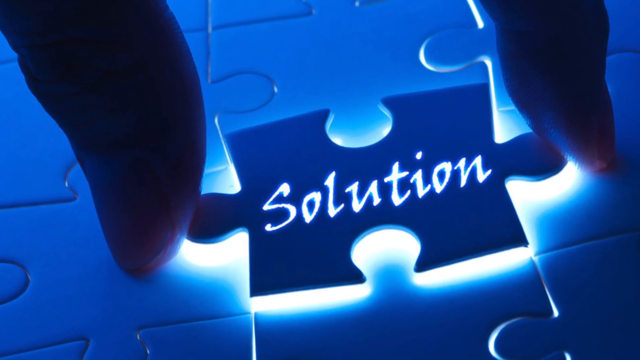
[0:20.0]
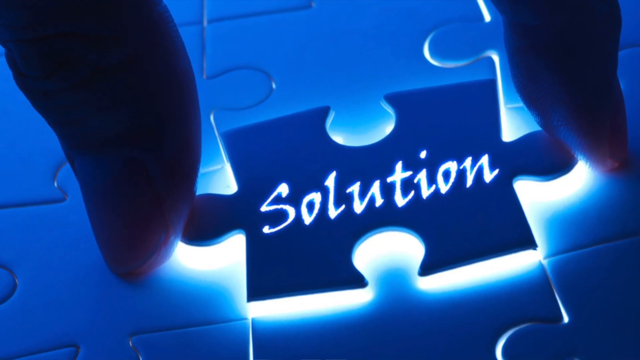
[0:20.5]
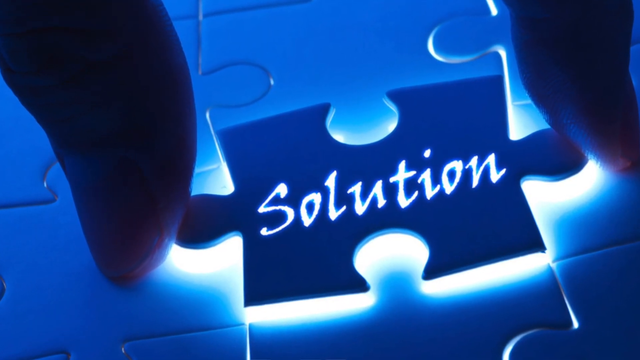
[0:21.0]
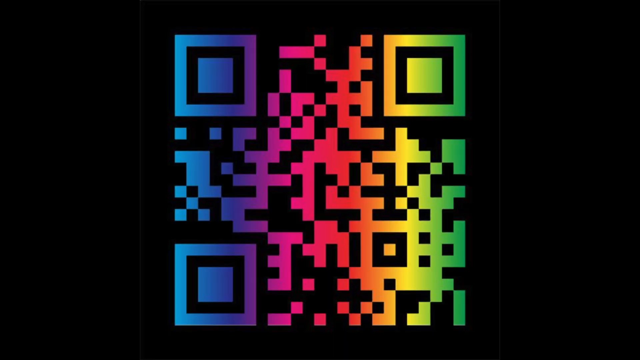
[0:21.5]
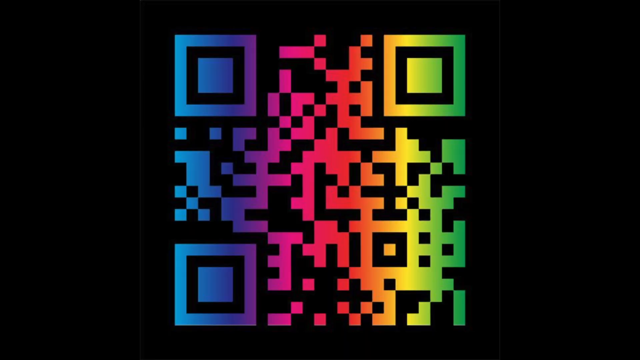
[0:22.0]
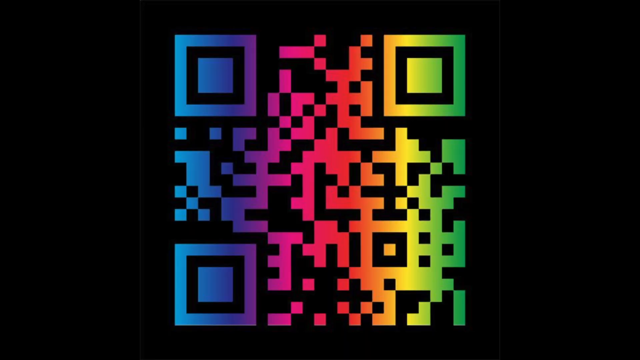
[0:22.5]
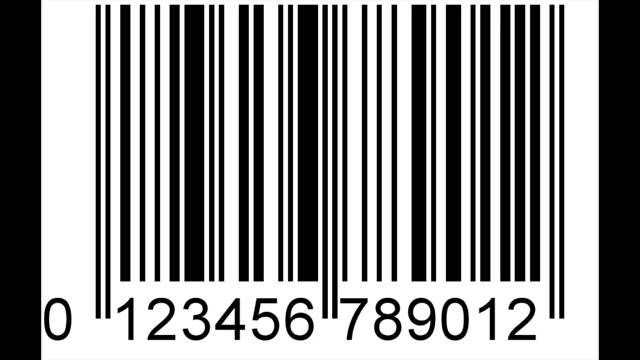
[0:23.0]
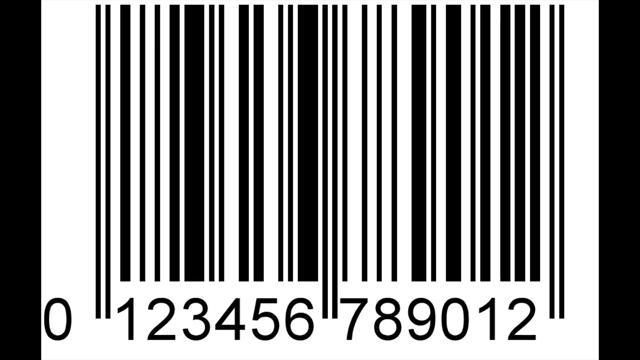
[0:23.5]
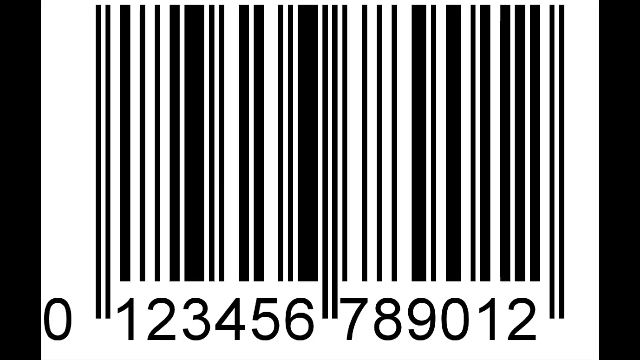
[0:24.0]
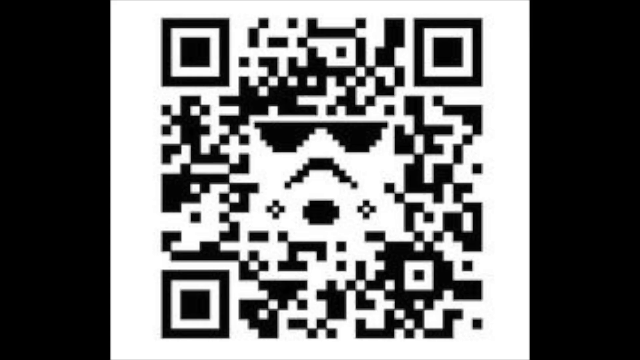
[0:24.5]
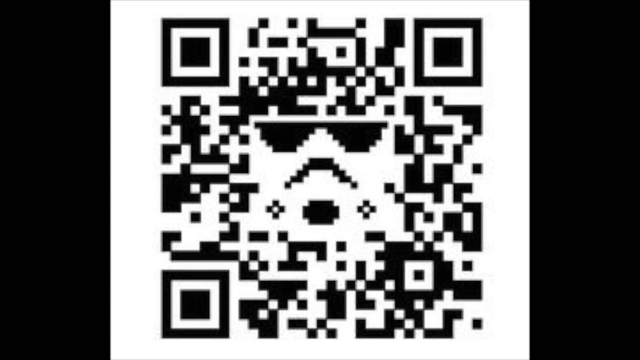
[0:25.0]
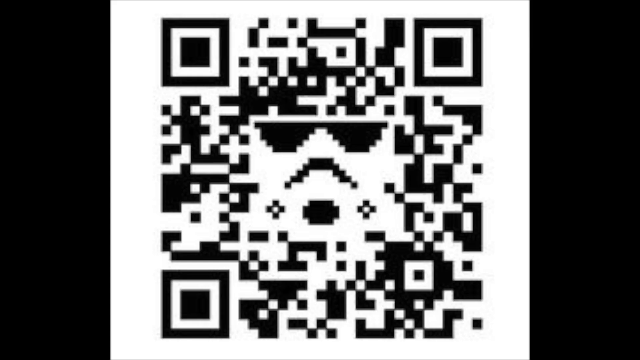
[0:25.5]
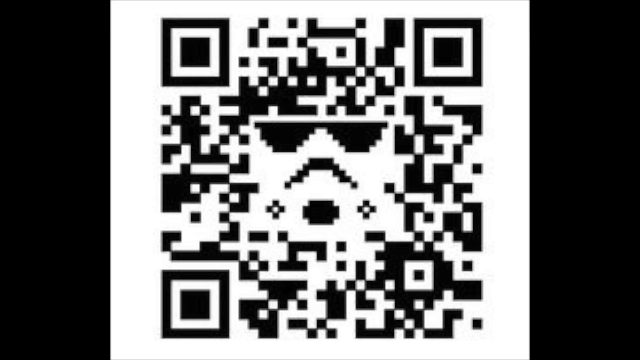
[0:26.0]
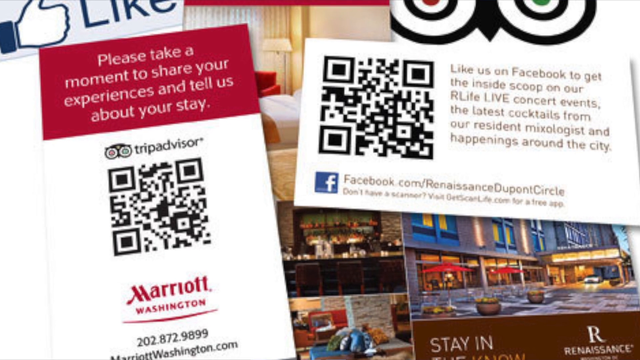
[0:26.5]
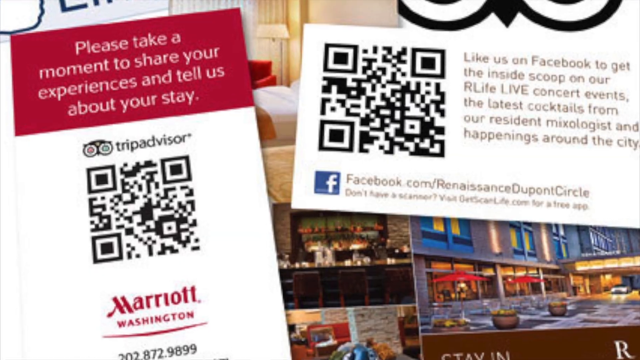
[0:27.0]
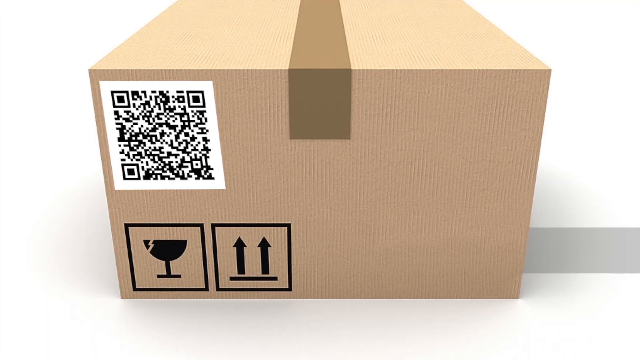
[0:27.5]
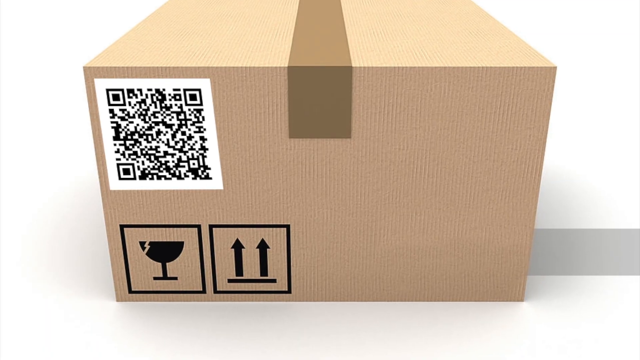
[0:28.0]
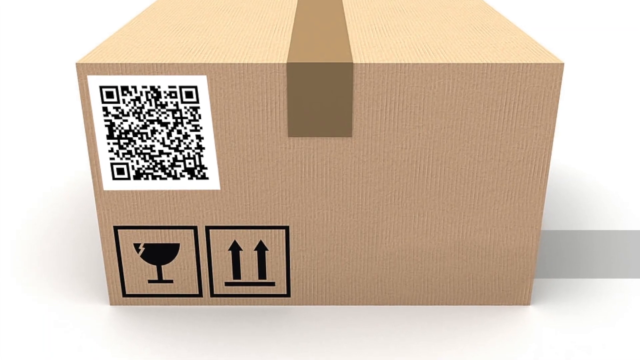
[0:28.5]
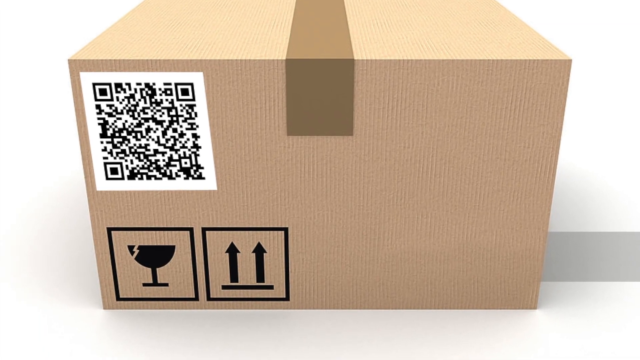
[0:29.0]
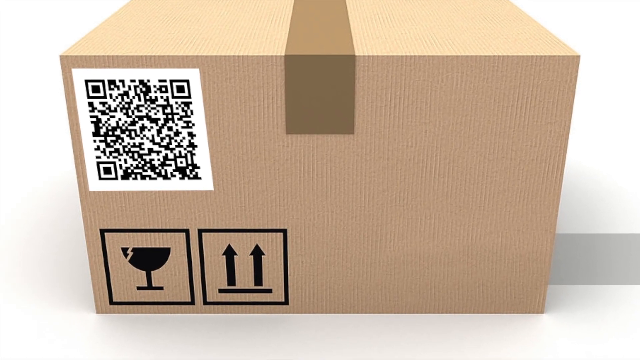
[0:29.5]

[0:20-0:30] A thumb and pointer finger hold a puzzle piece and put it into a puzzle that is already finished. The top of the piece appears to say "solution", and light shines from the bottom. The camera pans in and zooms in very close, and suddenly the screen changes to a multicolored barcode that looks kind of like an Instagram barcode, with the rest of the image dark. That image then swaps to the kind of barcode found on the back of packaging: black lines on a black and white background with the numbers "0123456789012" at the bottom. The scene changes to another barcode that appears to have a face in its center: a square barcode with squares in each corner and, in the middle, what looks like a person wearing shades, frowning, with a little goatee. Next, many pamphlets and cards lie on a table, and the two cards at the top both have barcodes. The one on the left says "Marriott, please take a moment to share your experiences and tell us about your stay." The one on the right is a card for Facebook. The scene then changes to a 3D animation of a cardboard box with a barcode on it and two symbols at the bottom: a glass with a crack in it and some arrows.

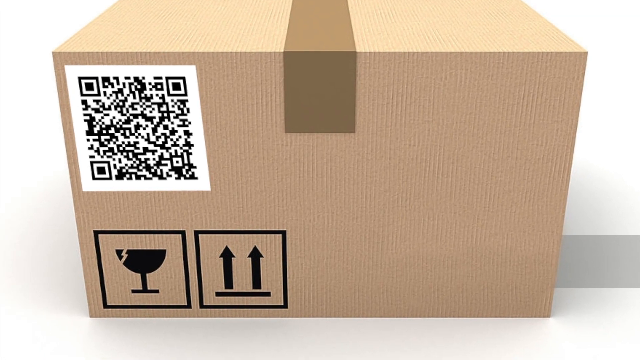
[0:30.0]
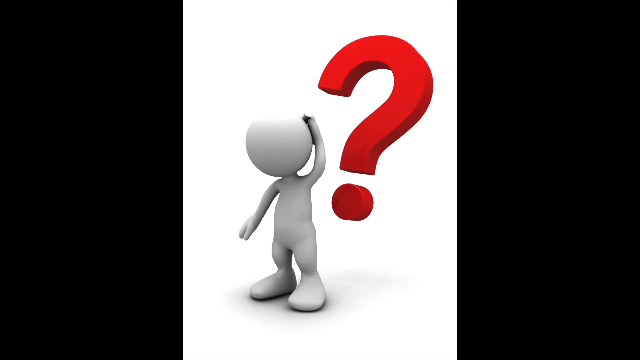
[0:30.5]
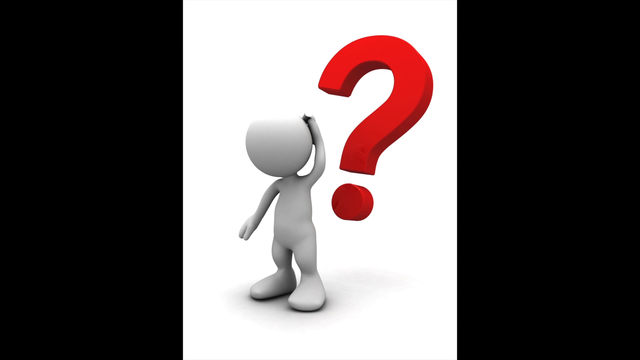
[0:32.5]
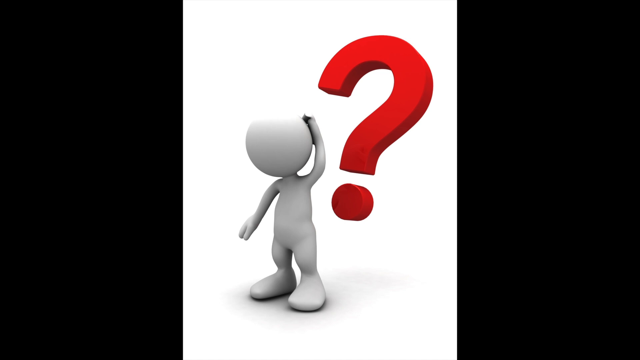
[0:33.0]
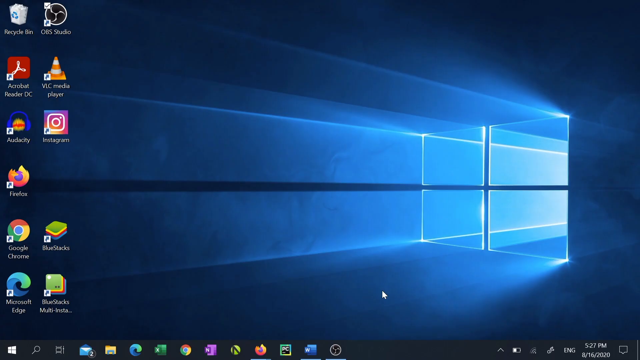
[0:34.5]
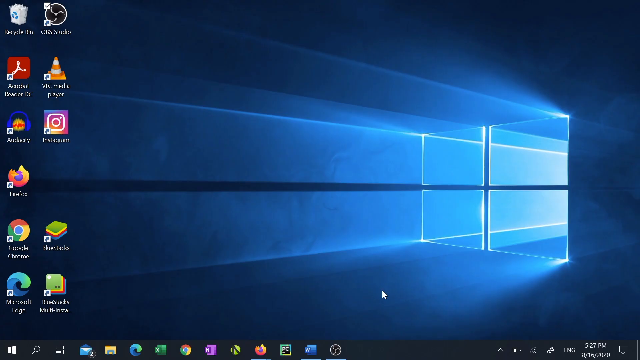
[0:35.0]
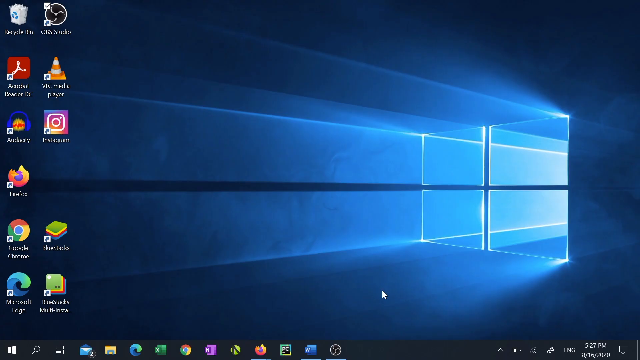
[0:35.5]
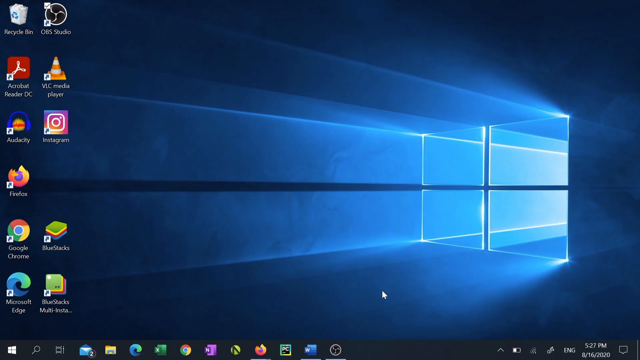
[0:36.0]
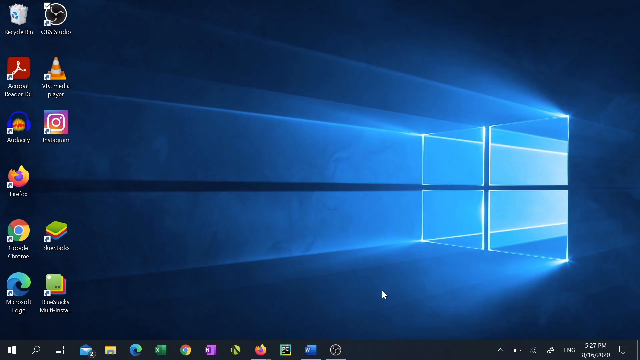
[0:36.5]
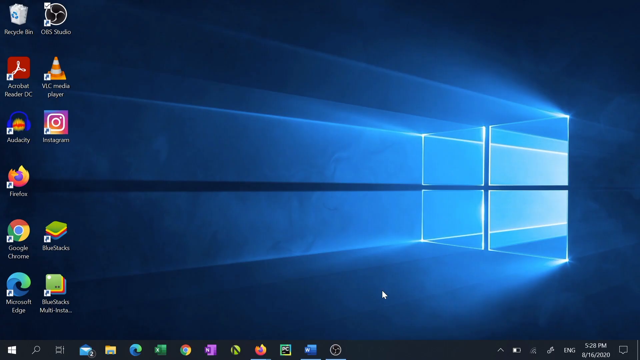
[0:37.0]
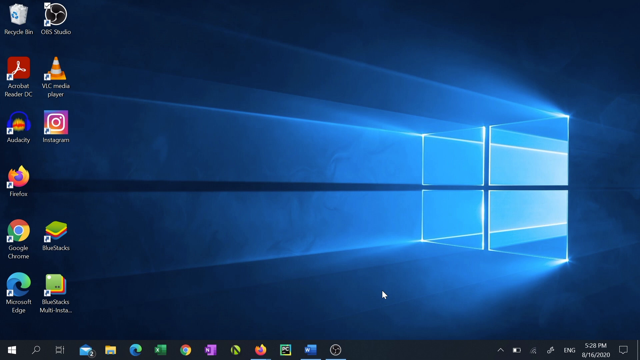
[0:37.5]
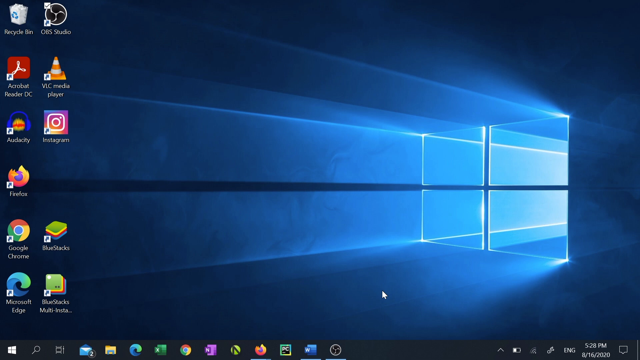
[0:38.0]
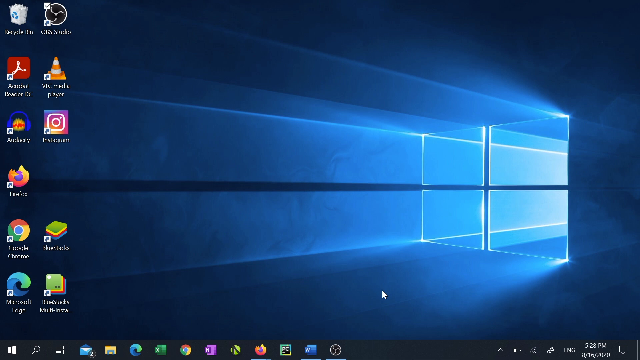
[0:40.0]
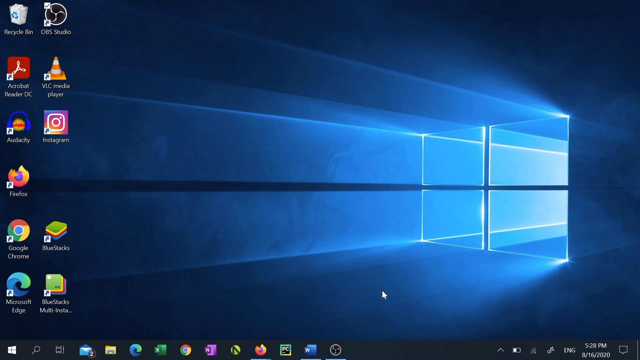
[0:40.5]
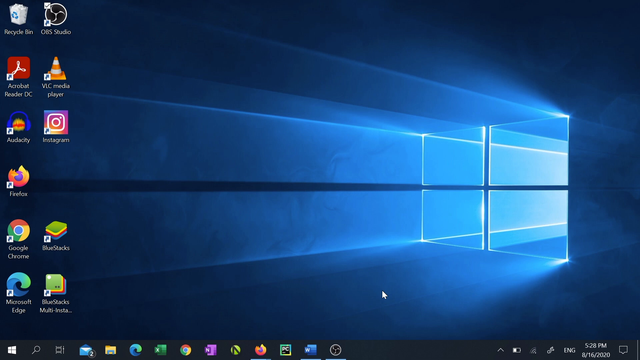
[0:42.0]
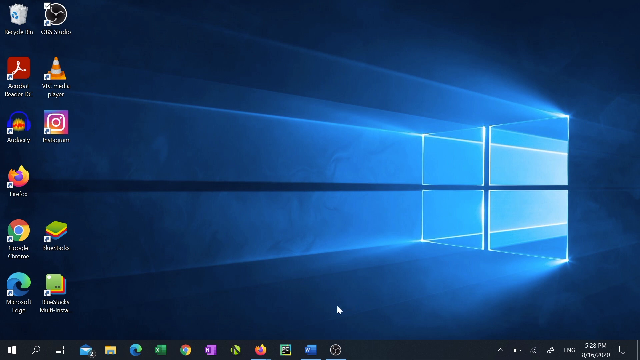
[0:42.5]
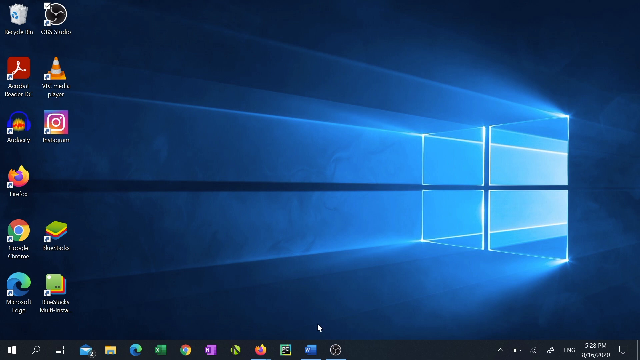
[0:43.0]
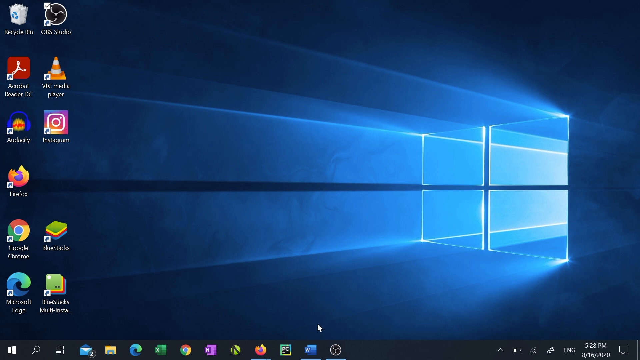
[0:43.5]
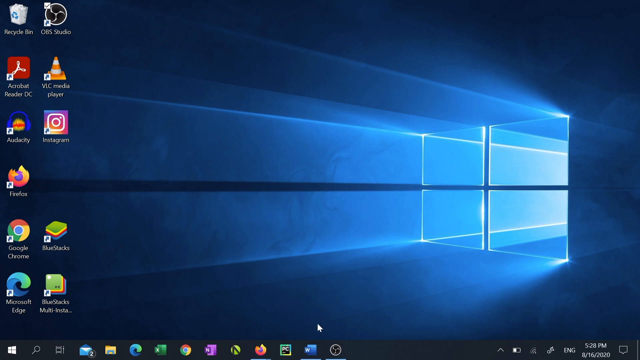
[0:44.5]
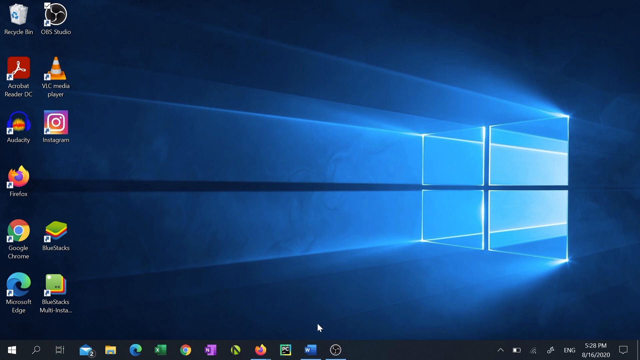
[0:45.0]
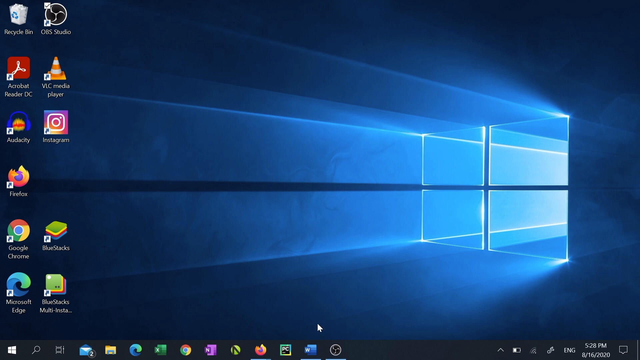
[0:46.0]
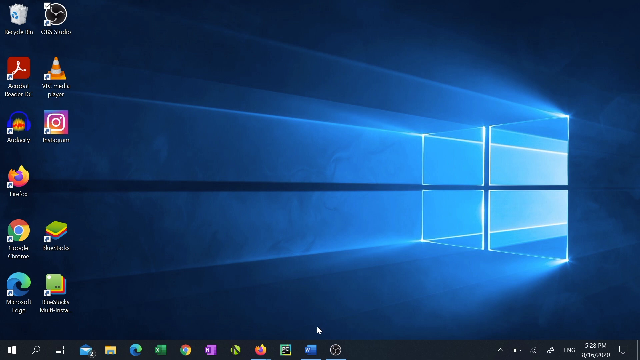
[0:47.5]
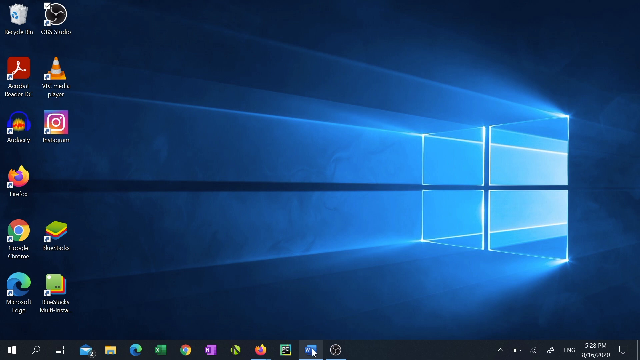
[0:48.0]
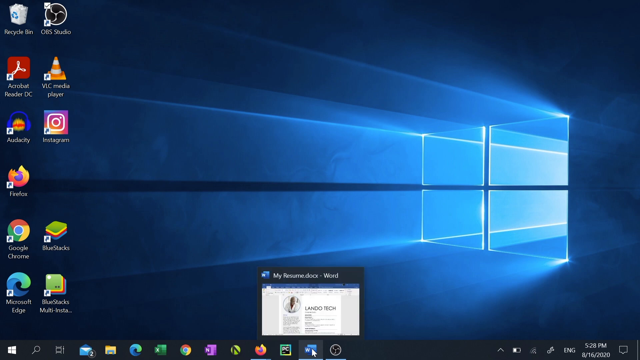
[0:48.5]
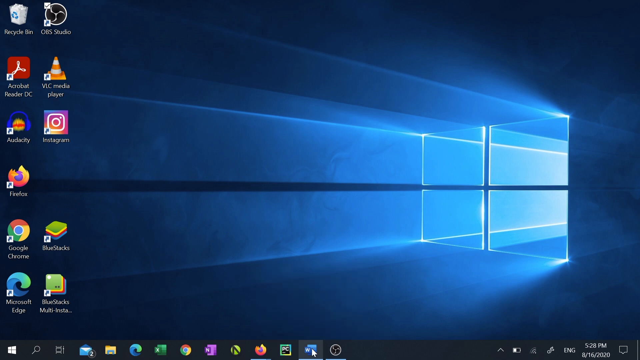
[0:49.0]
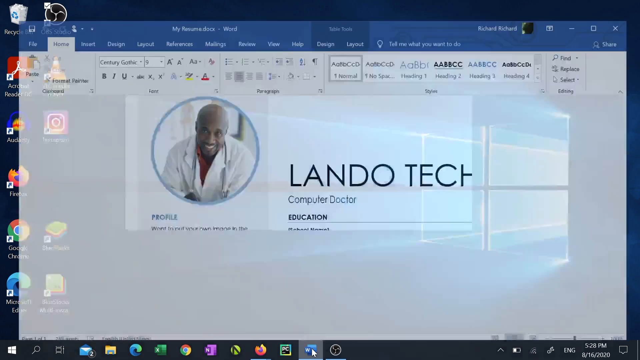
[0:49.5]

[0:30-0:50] A 3D animation shows a cardboard box in a room with a white background. A very large barcode is on the upper left corner of the box, and at the bottom are two symbols, a cracked glass and two arrows pointing up, each surrounded by a square. Suddenly the scene changes to a white backdrop with a little man made of what looks like white putty, with a circular head, a putty-like body, two legs and about two fingers. A red question mark is to his right, and he rubs his head. This stays on screen for a while. Then the Windows home screen appears, with the four-paned window on the right side and light shining through it, many application icons on the left side, icons pinned along the bottom, and the date and time in the bottom right corner. The mouse cursor moves down a little, hovers over a blue folder and clicks it. For a second something that says "Lando Tech" appears, possibly a website or an application someone is creating, with an image of a black man in a circle wearing a white lab coat.